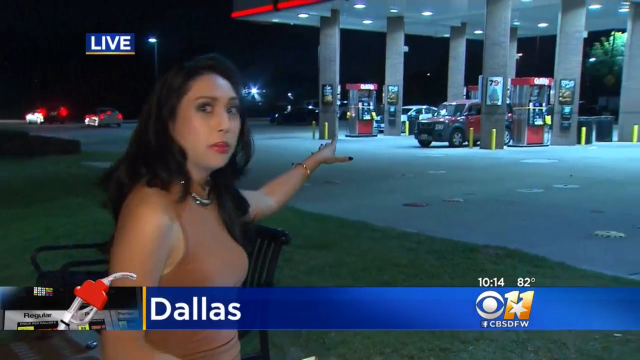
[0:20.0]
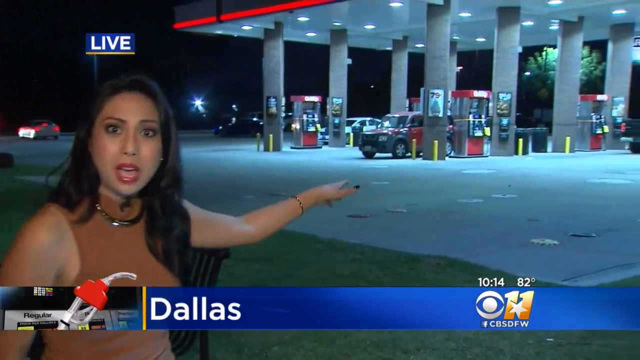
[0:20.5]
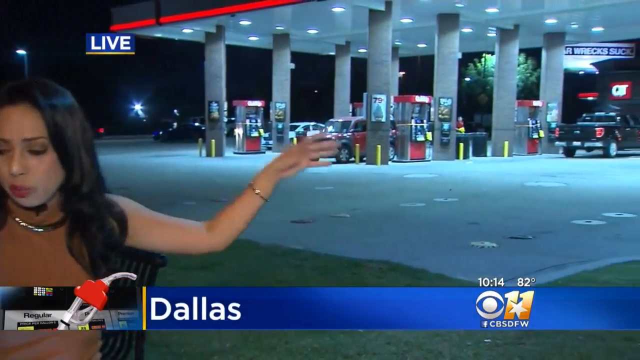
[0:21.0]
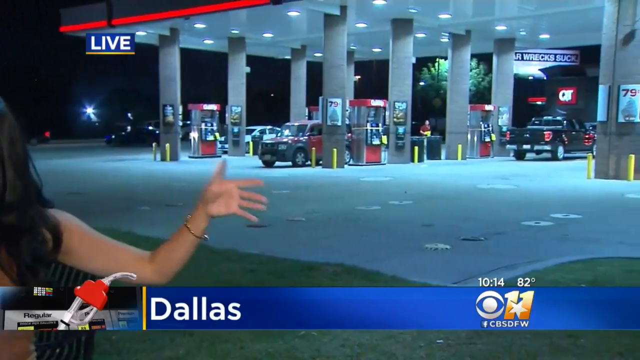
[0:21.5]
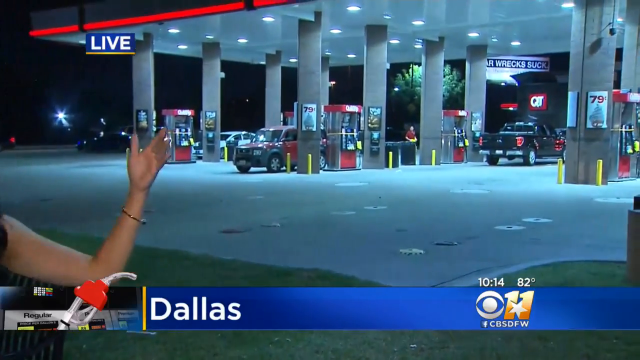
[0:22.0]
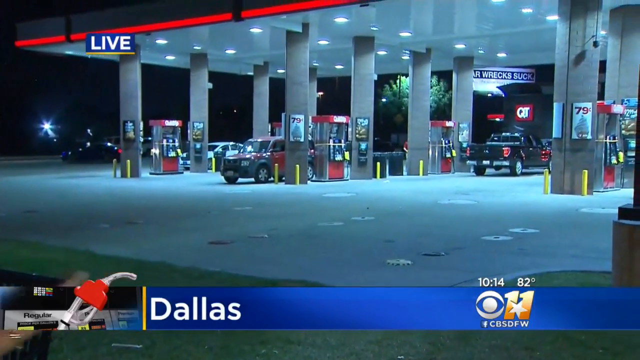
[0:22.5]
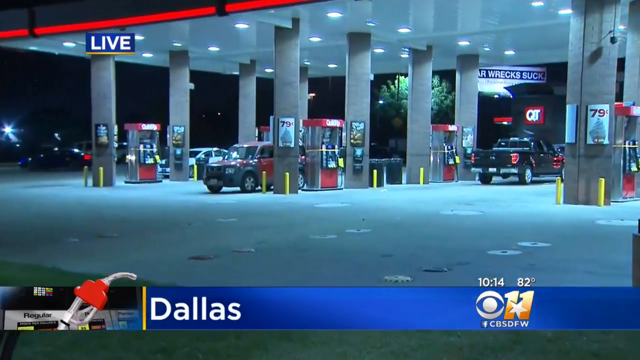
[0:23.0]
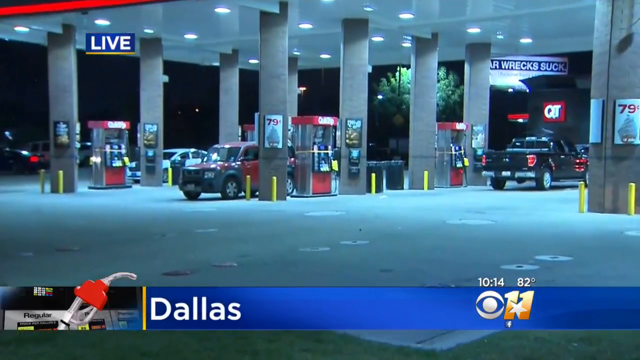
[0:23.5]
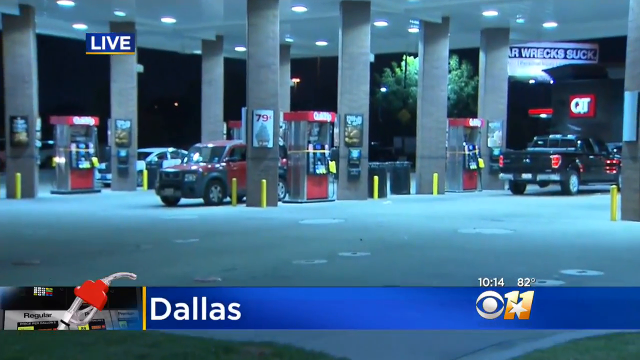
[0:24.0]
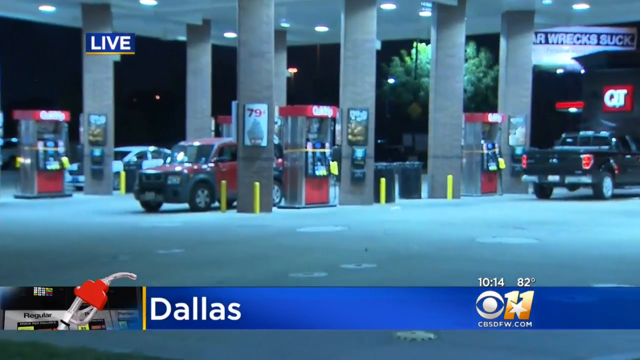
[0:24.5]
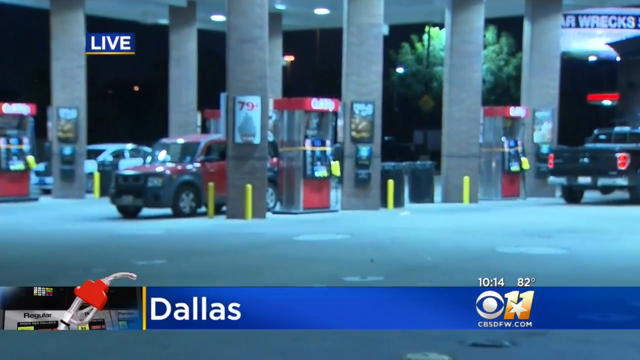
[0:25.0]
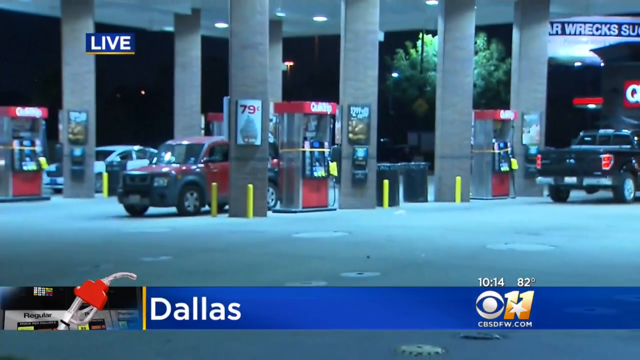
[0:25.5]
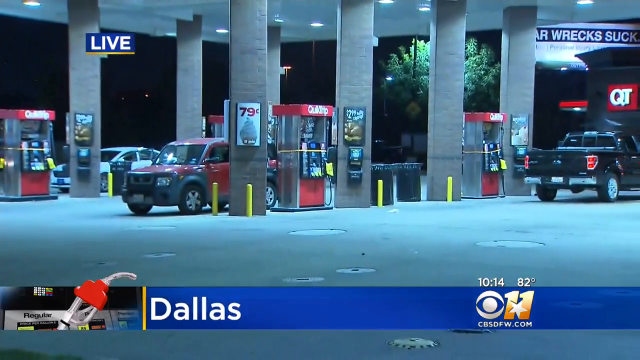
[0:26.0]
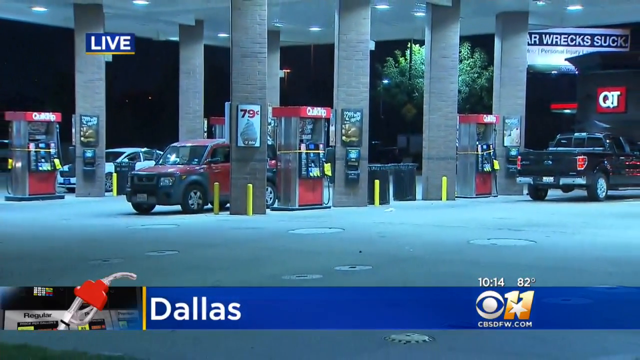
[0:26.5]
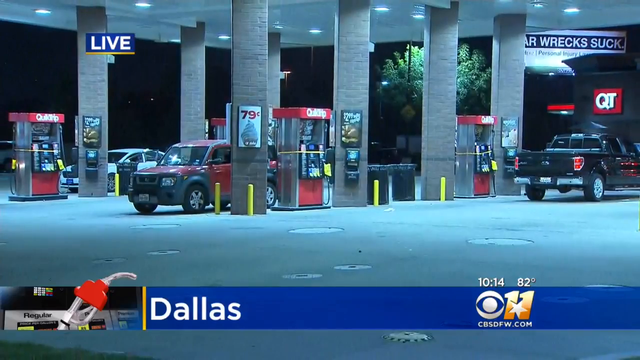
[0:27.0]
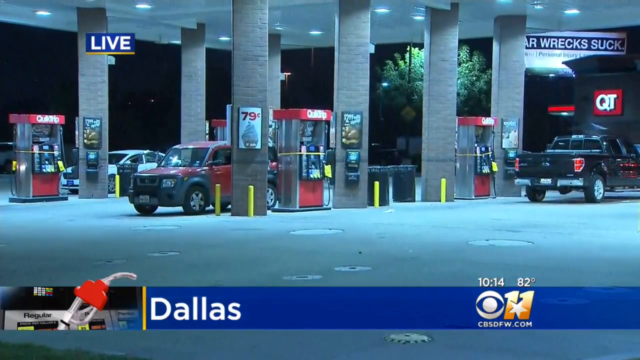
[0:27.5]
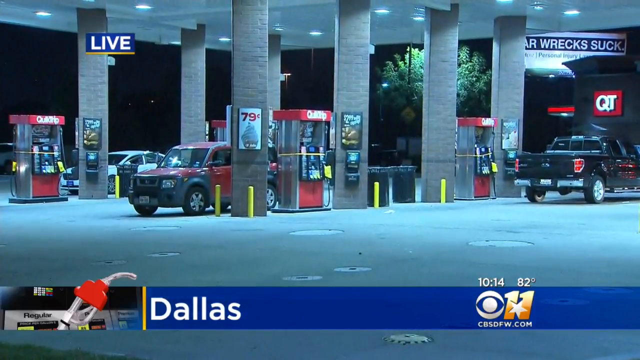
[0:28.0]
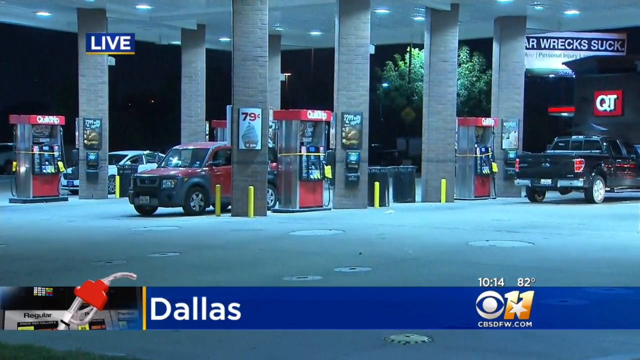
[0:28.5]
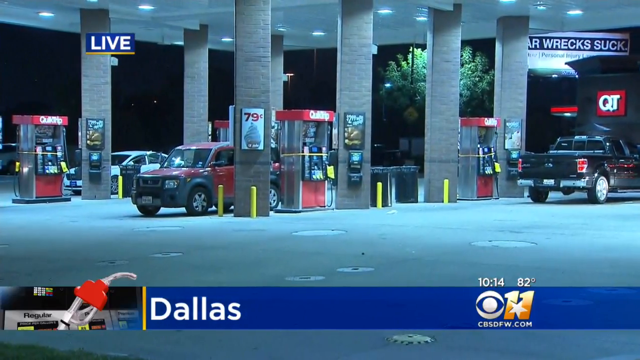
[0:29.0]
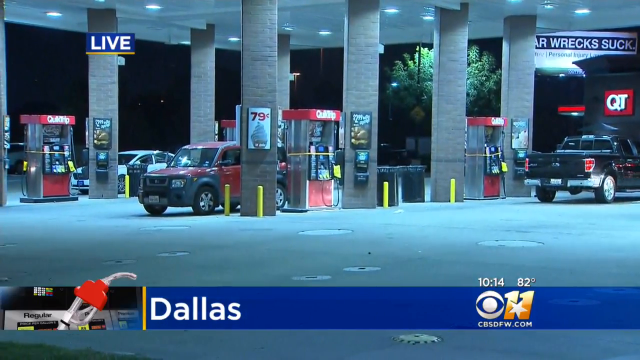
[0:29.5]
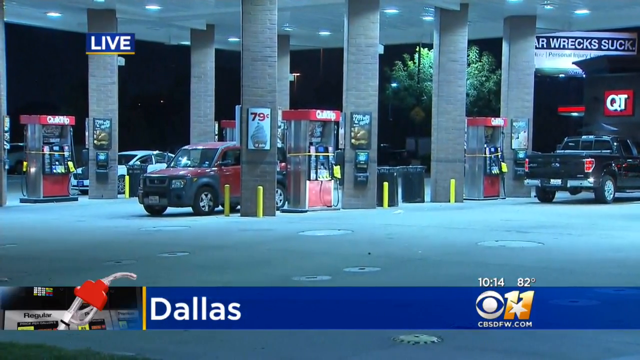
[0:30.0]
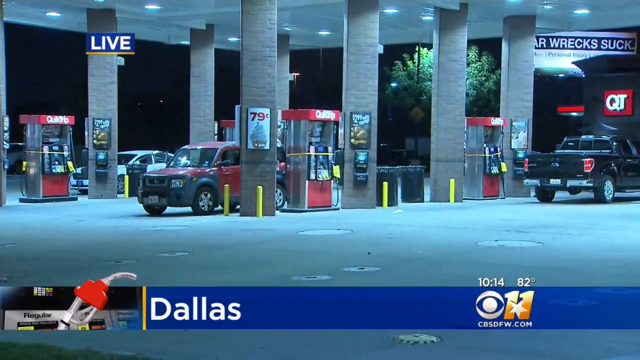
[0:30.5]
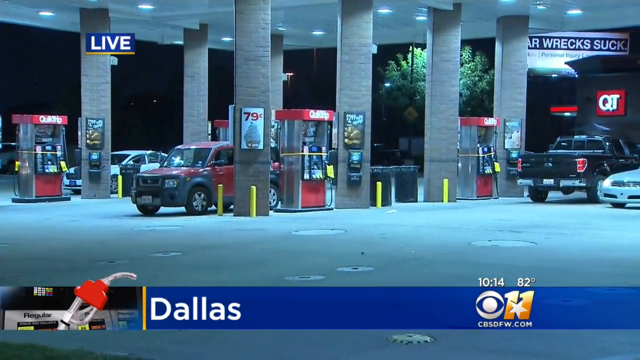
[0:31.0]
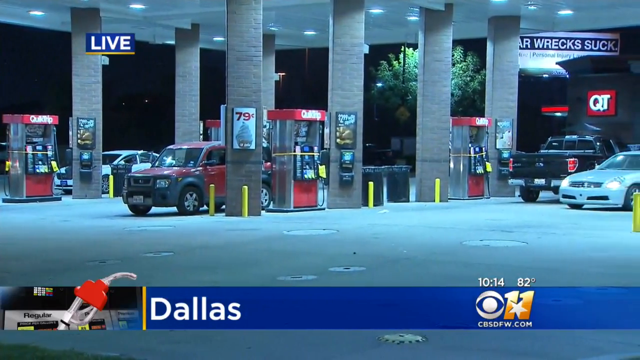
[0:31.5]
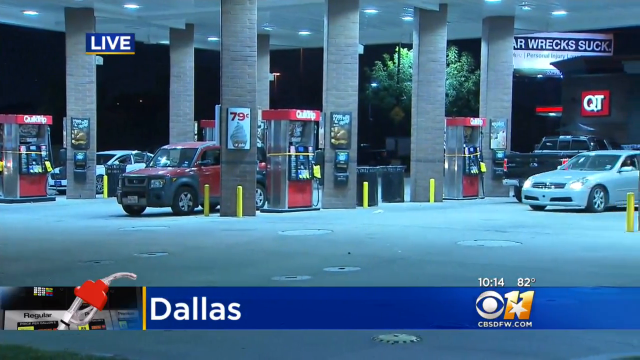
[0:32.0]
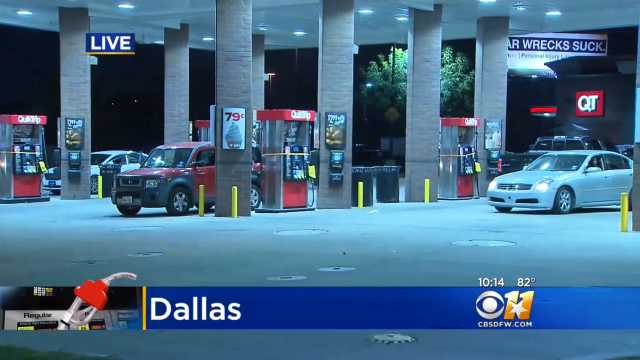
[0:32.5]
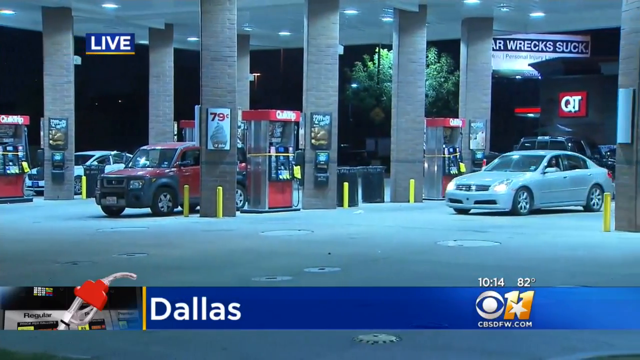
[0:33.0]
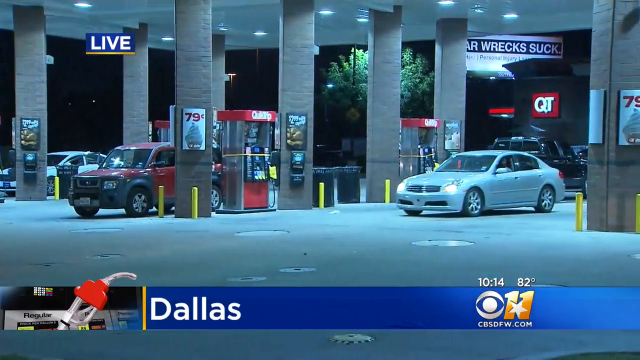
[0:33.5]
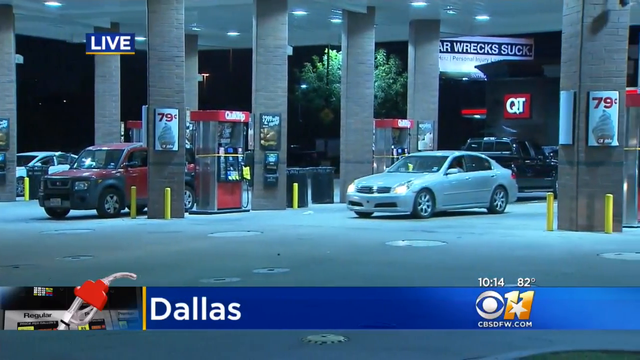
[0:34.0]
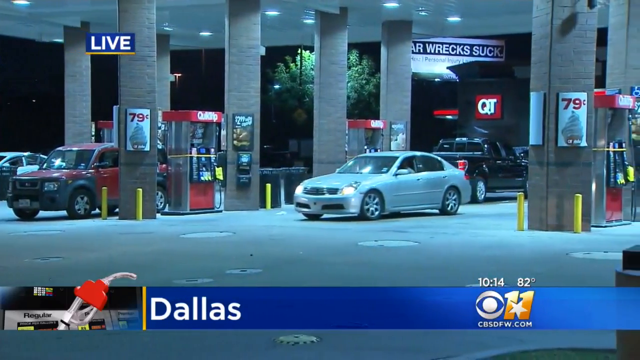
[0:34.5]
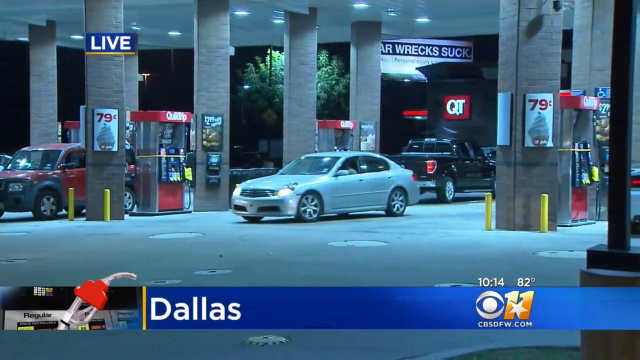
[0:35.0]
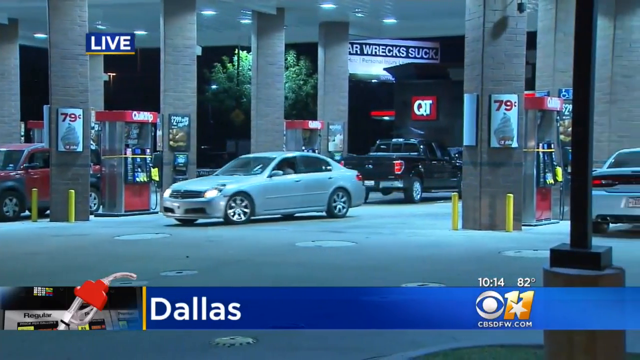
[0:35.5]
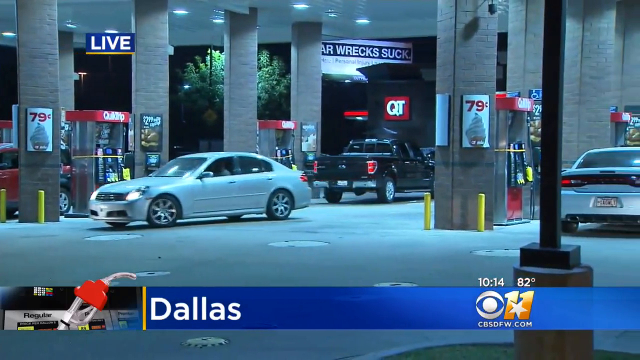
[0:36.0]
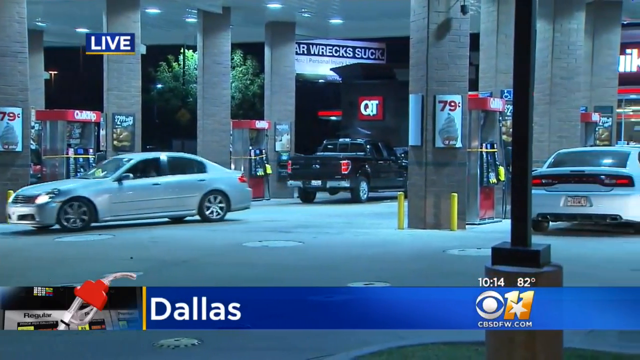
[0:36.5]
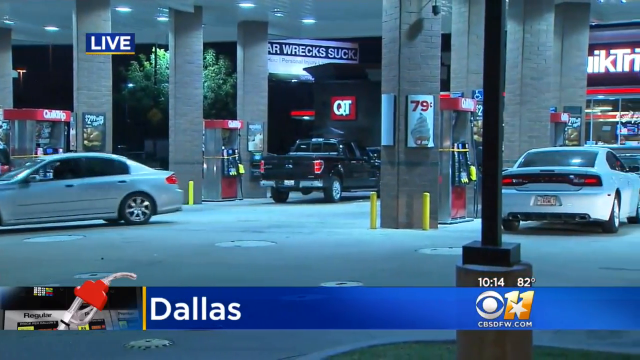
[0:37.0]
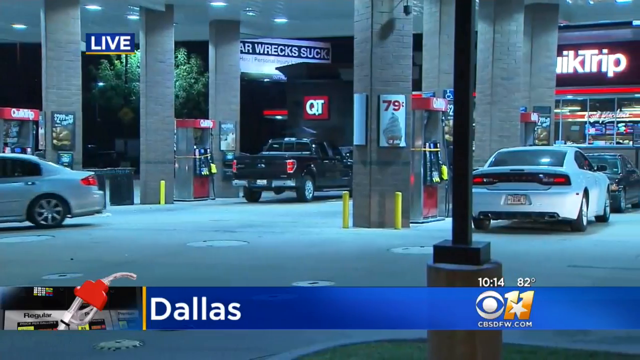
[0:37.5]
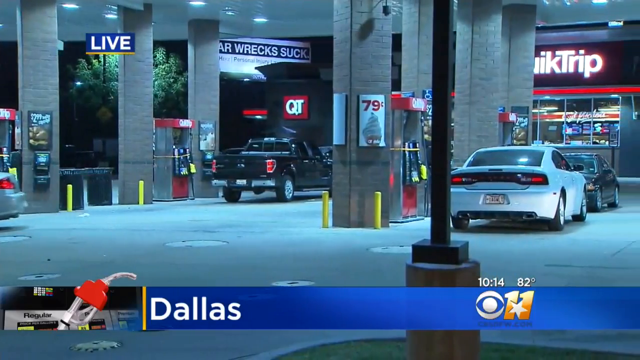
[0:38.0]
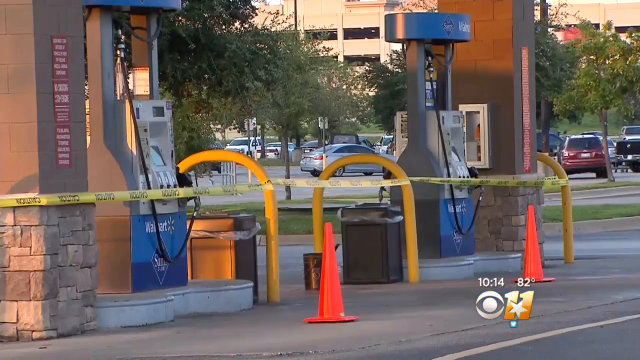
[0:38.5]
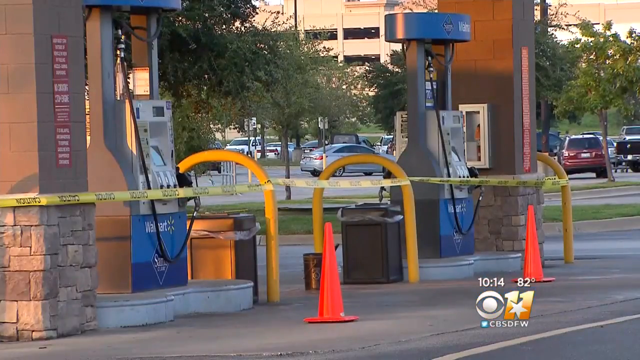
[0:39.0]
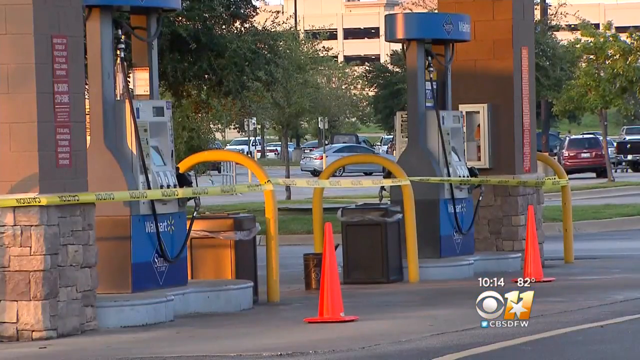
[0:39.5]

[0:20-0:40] A Hispanic reporter with brown skin and long, dark hair, wearing red lipstick and a brown sleeveless top, reports live from a gas station in Dallas. The CBS 11 logo is in the bottom right of the screen. She points toward a gas station full of cars. It is nighttime, and the clock reads 10:14 pm. She speaks into the camera, and then the camera moves away from her and focuses on the gas station she was pointing at. Cars drive in and out of the gas station while other cars sit there pumping gas. The segment then transitions to a photo of the gas station during the daytime, with caution tape around the pumps.